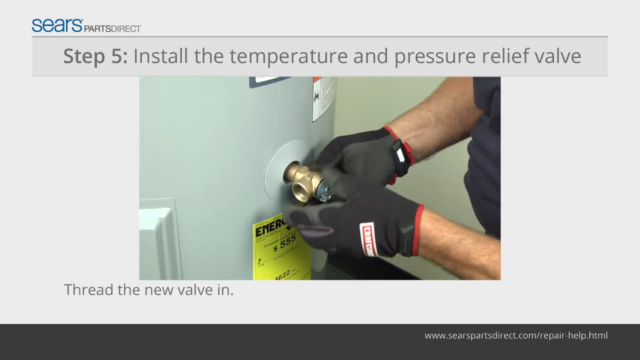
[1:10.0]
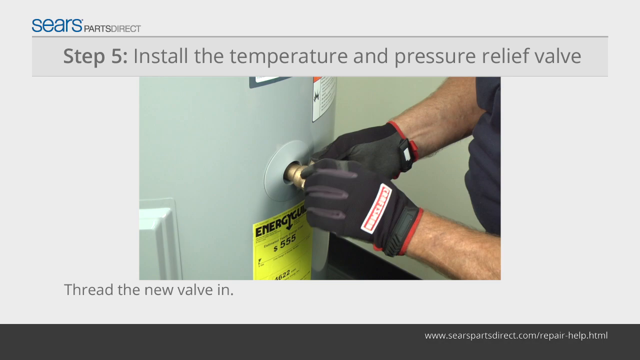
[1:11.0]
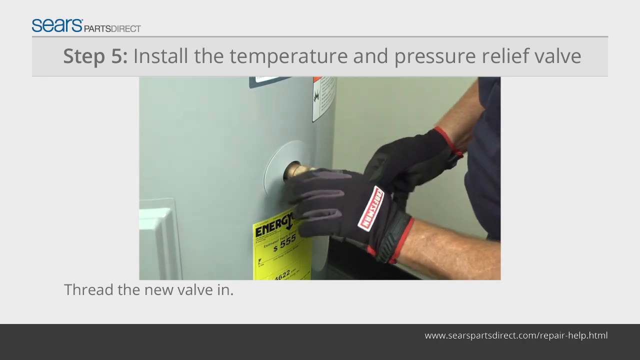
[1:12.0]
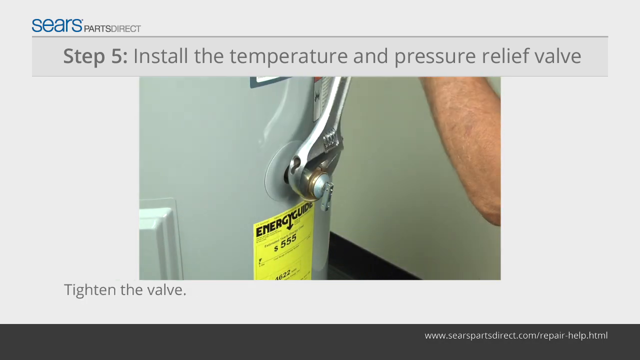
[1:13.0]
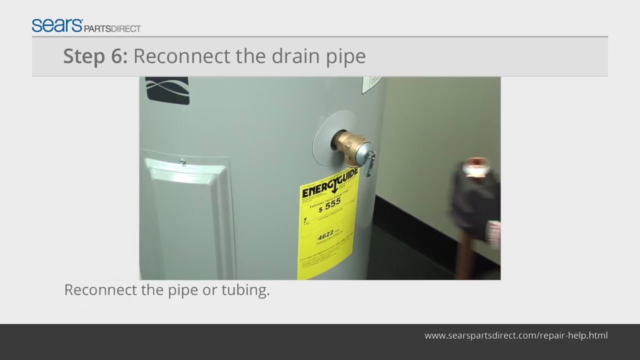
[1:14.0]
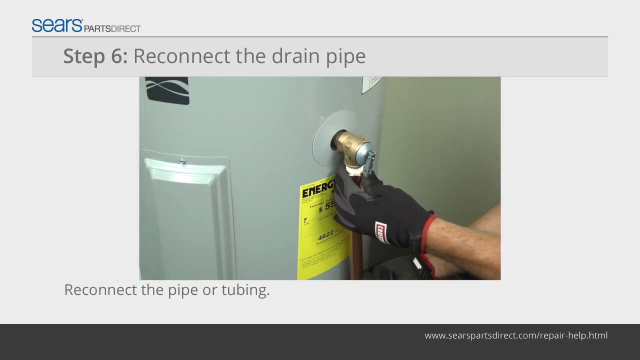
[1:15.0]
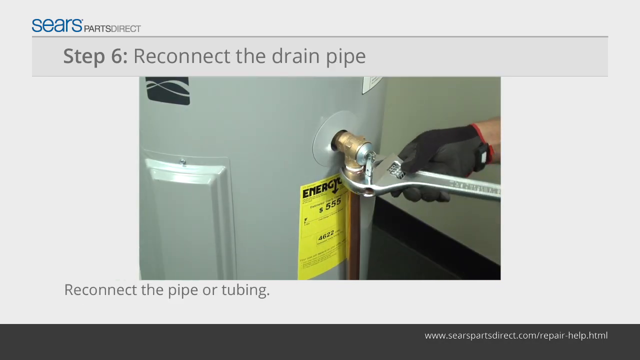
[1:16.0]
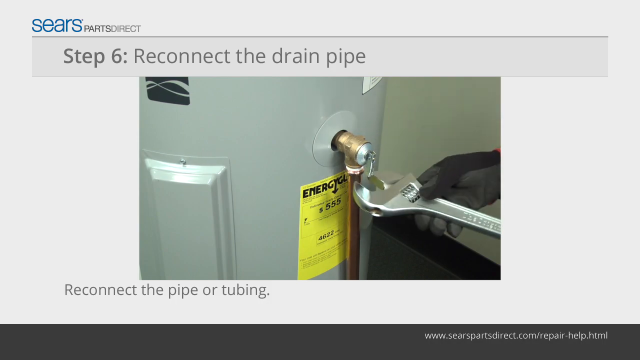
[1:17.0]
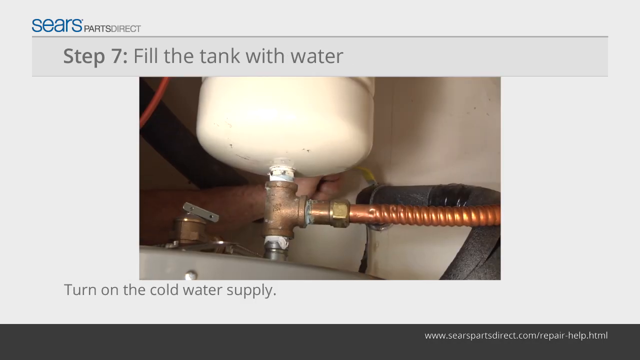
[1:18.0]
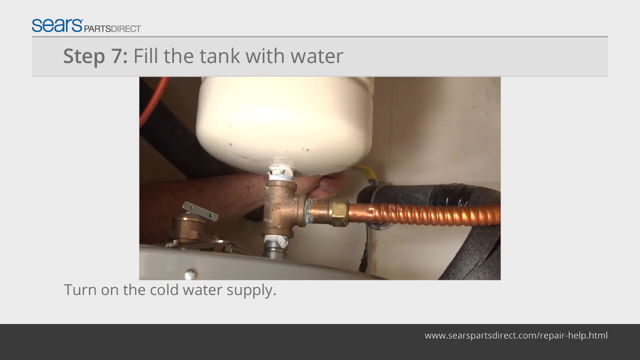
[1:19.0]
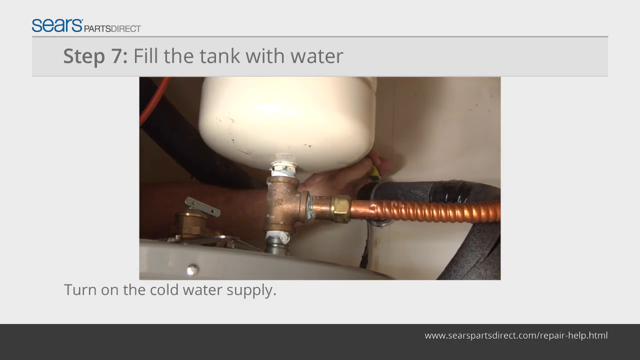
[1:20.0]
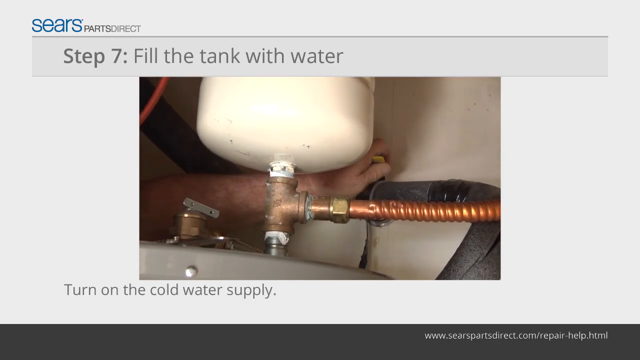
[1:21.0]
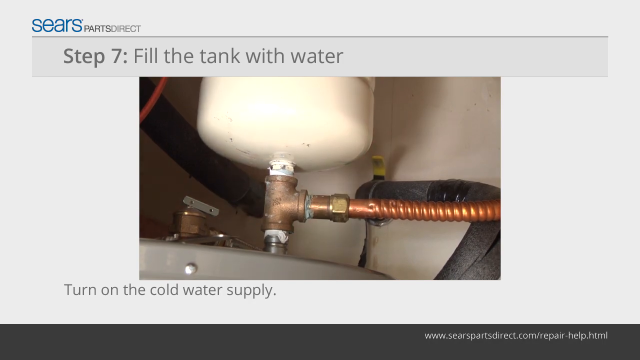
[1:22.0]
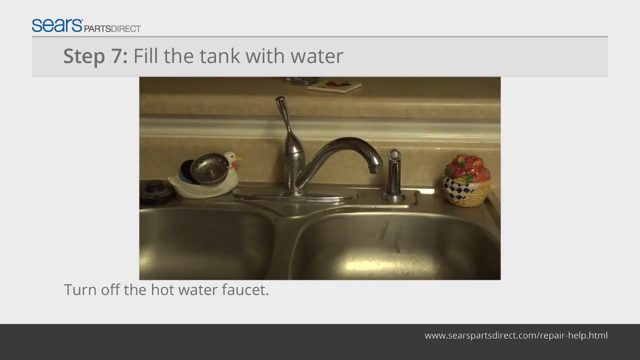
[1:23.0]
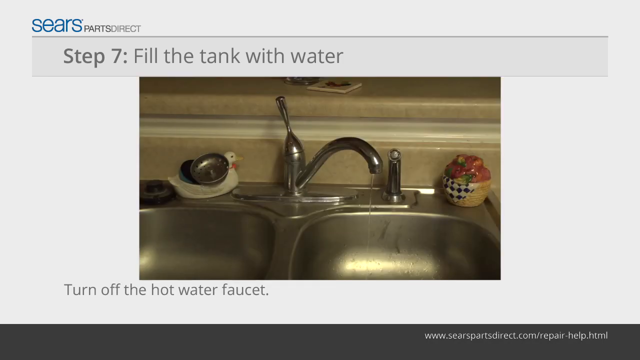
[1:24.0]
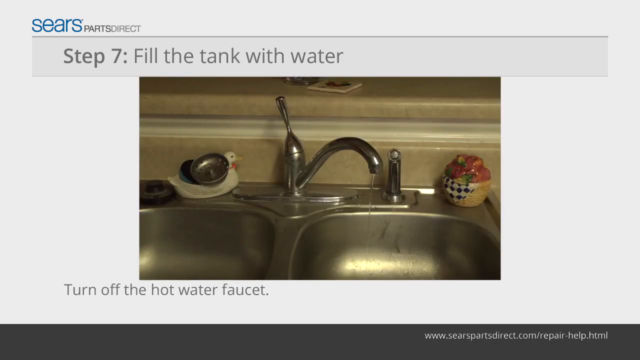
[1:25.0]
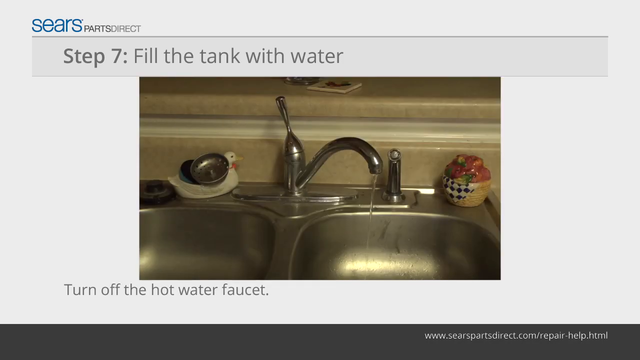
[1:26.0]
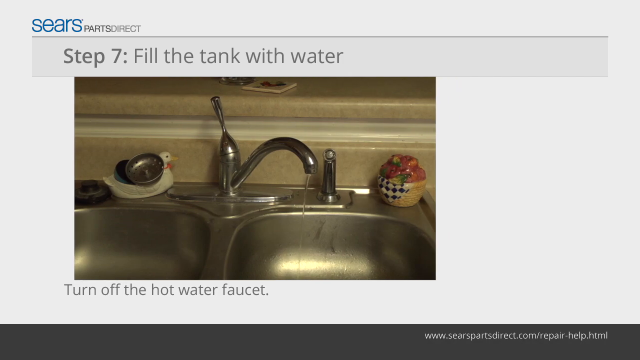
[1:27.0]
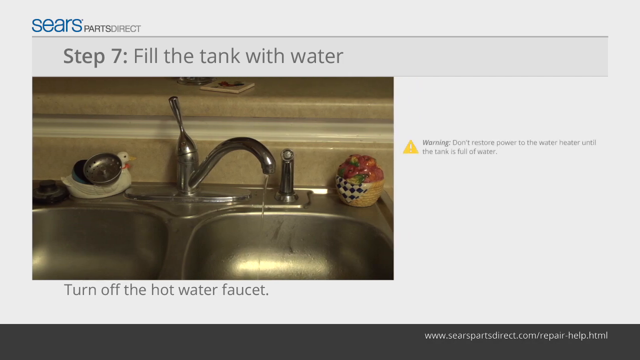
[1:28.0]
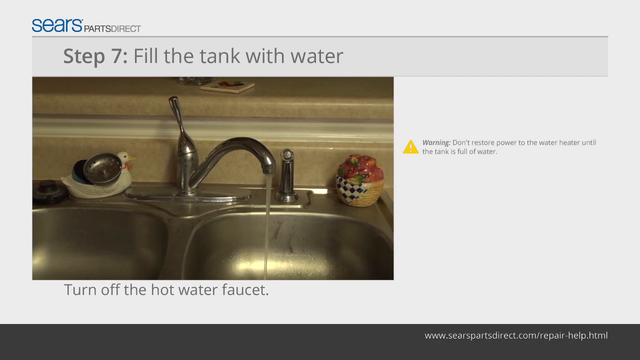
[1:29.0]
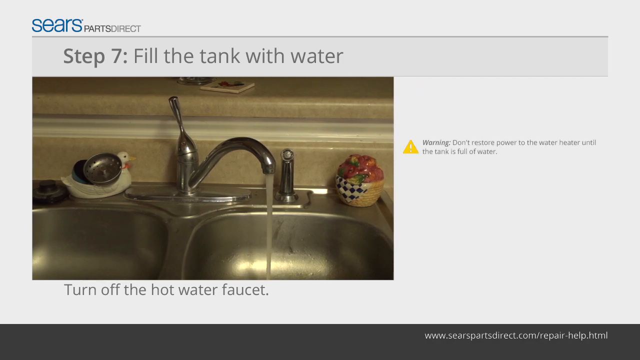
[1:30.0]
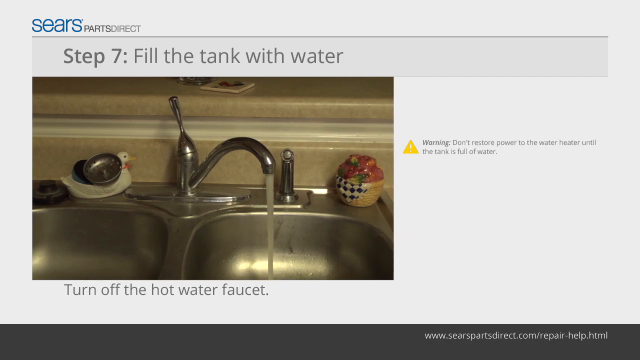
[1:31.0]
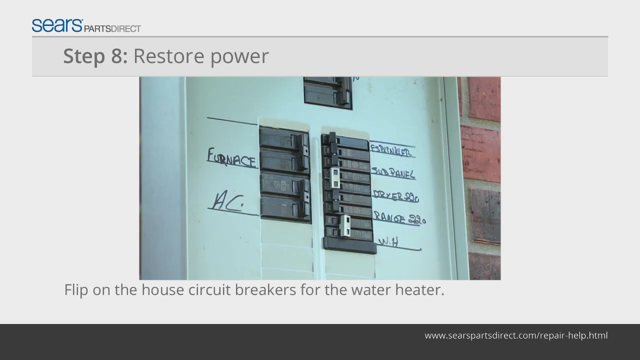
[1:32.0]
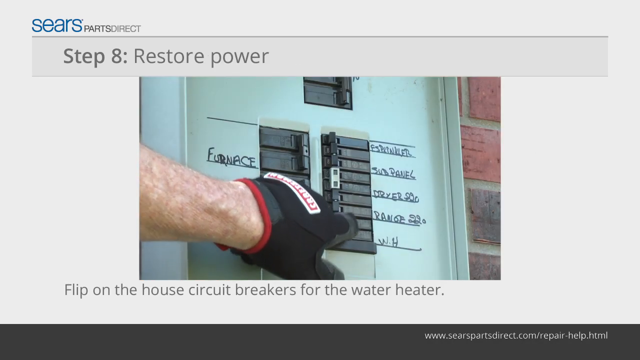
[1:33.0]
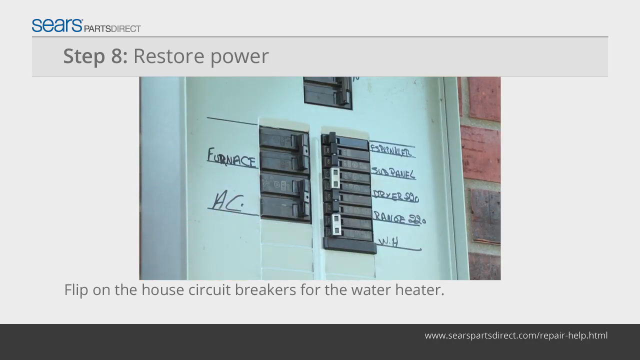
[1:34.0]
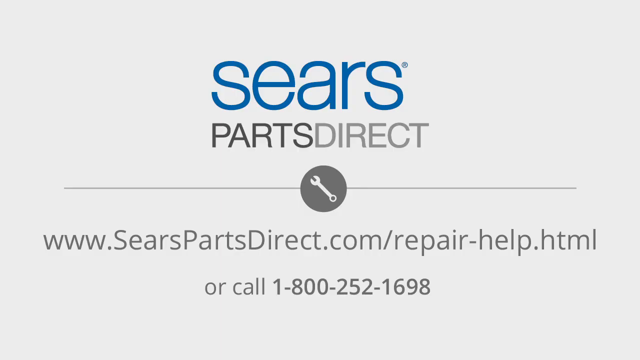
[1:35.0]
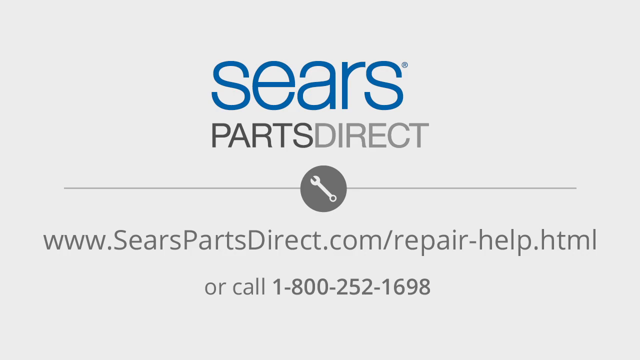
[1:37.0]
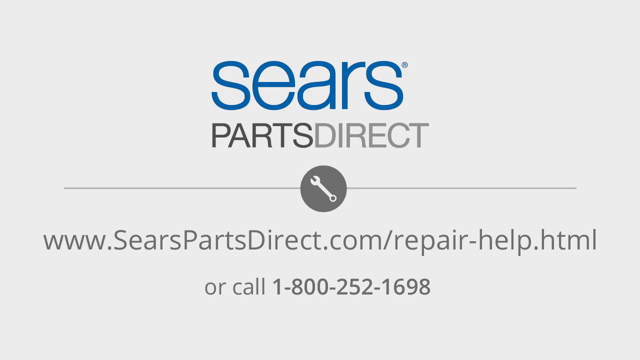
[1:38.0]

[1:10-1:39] At the top of the screen, "Step 5. Install the temperature and pressure relief valve" appears, with a video beneath it of a plumber of whom only his arms and black gloves are visible. He appears to be screwing on the gold nozzle, then places a silver wrench around the nozzle and turns it clockwise. He does the same with a different kind of pipe, using the wrench and apparently screwing it on as well. The scene moves to an unclear location showing a white cylinder at the top with a chrome or gold nozzle coming out of it and a pipe running parallel to the ground underneath. The plumber's hands are visible, now without gloves. Back at the sink, water is dripping rather than coming fully out. Above, text reads "Step 7. Fill the tank with water," and the water drizzles out and then comes fully out, as if turned all the way on. Next comes a visual with a white background at the top reading "Step 8. Restore power," followed by the fuse box, where the fuse is turned back on. The video finishes on a white background with "Sears Parts Direct" in the center.